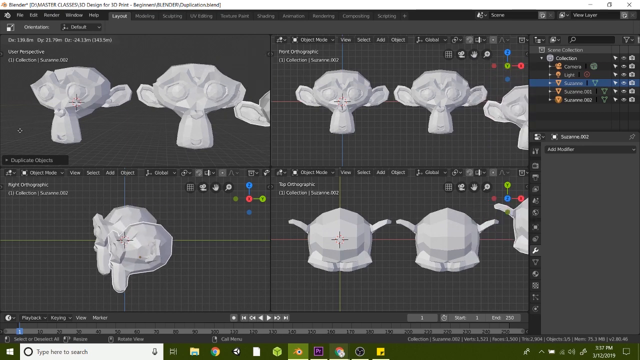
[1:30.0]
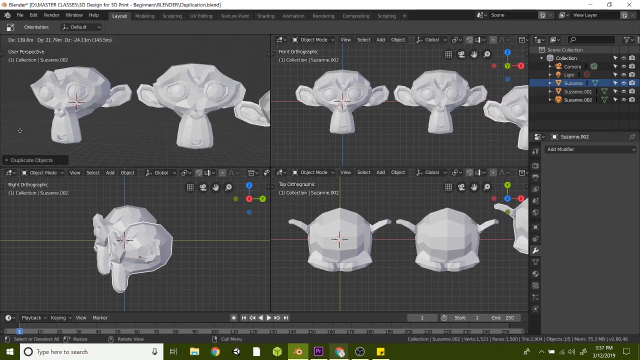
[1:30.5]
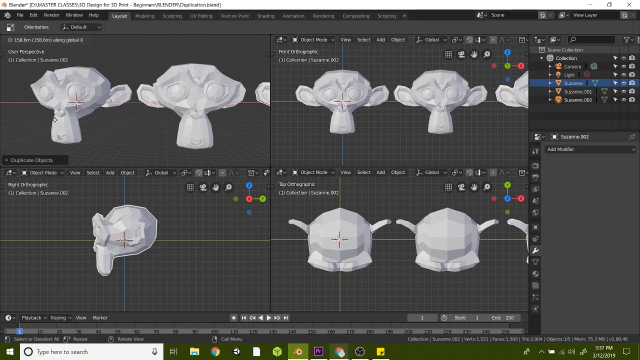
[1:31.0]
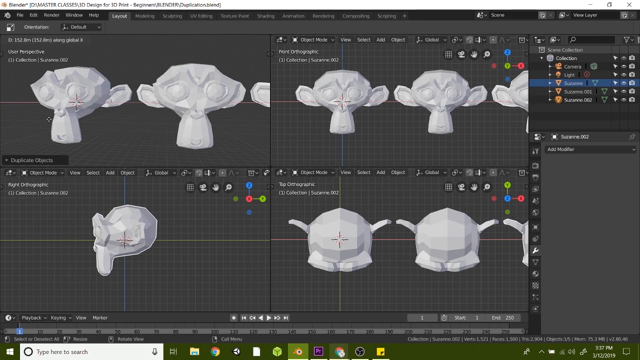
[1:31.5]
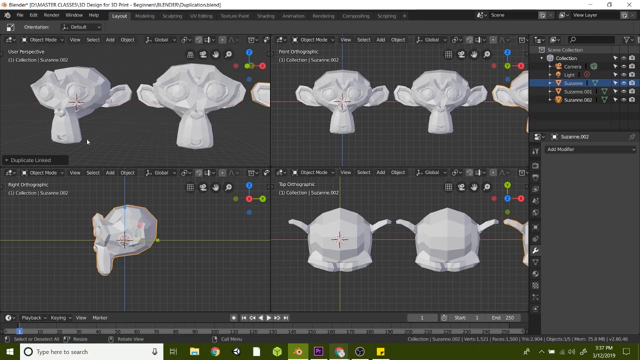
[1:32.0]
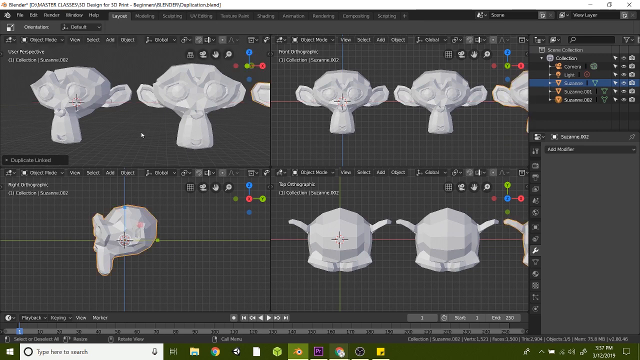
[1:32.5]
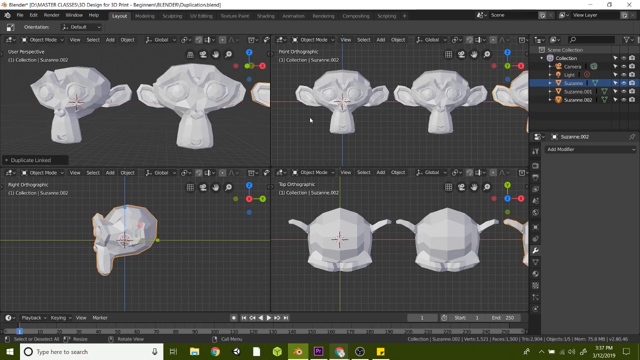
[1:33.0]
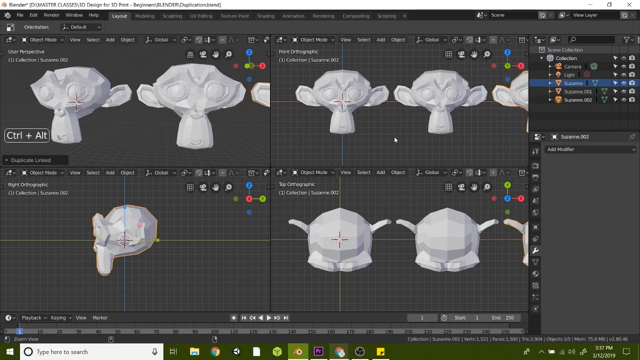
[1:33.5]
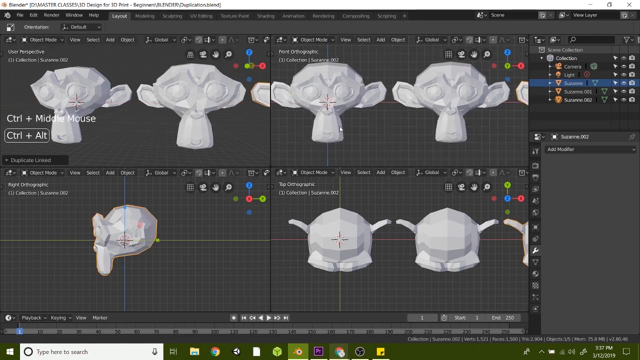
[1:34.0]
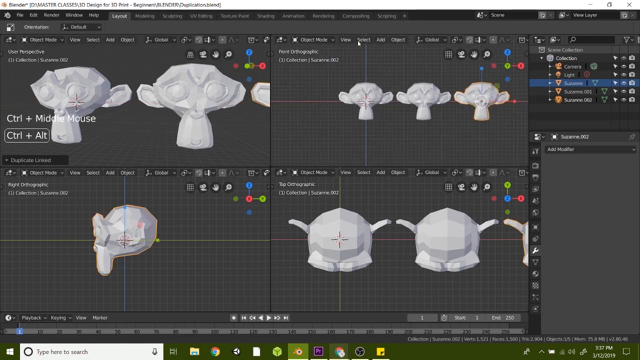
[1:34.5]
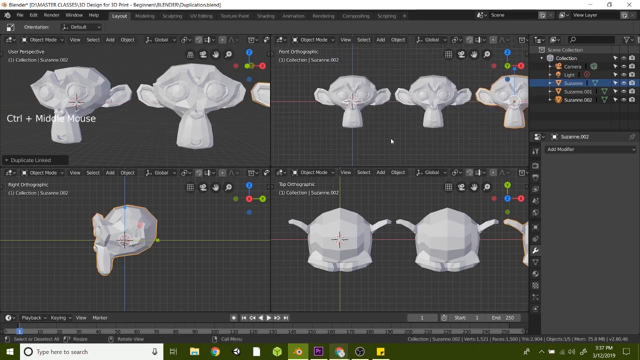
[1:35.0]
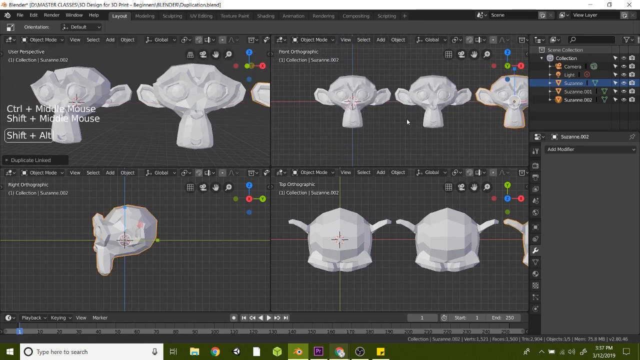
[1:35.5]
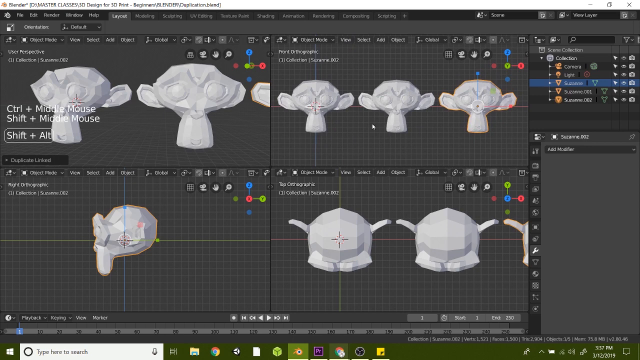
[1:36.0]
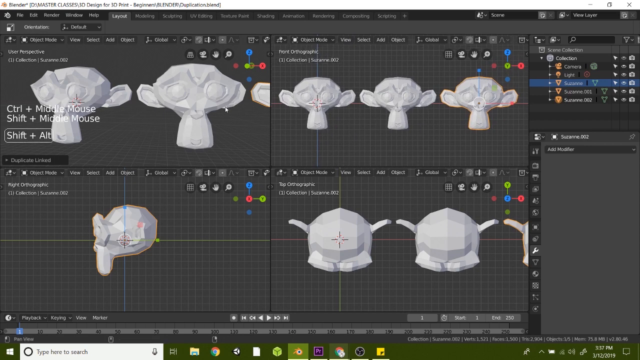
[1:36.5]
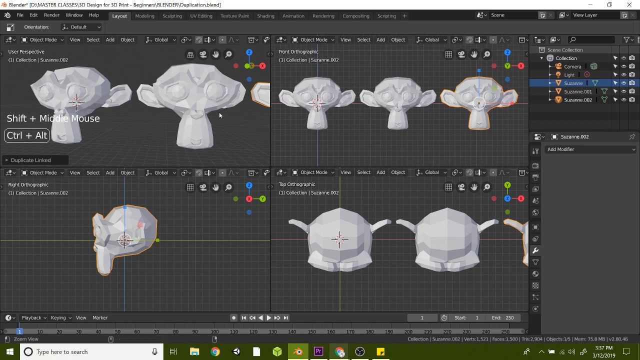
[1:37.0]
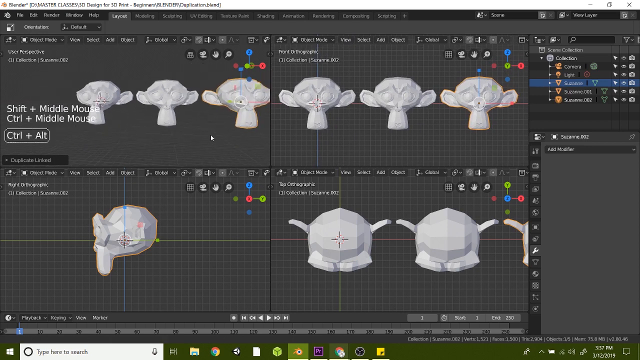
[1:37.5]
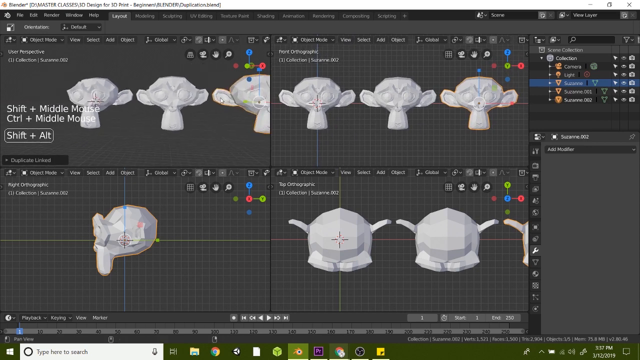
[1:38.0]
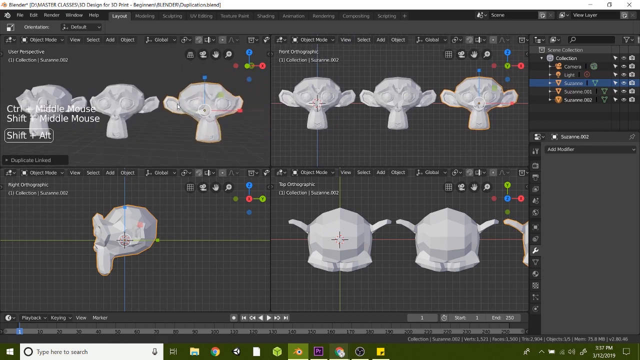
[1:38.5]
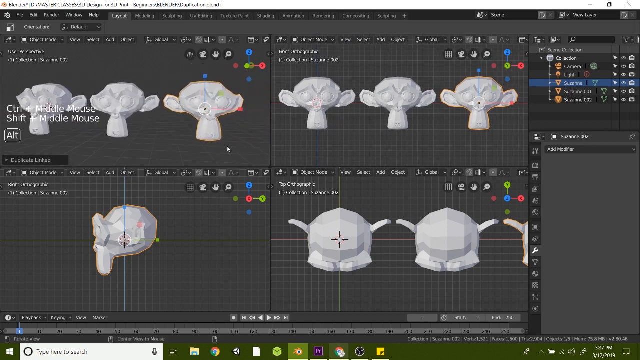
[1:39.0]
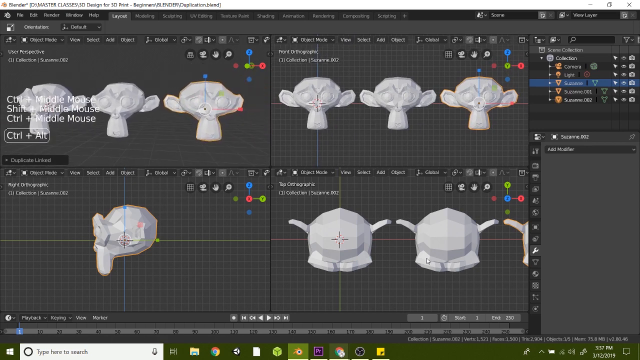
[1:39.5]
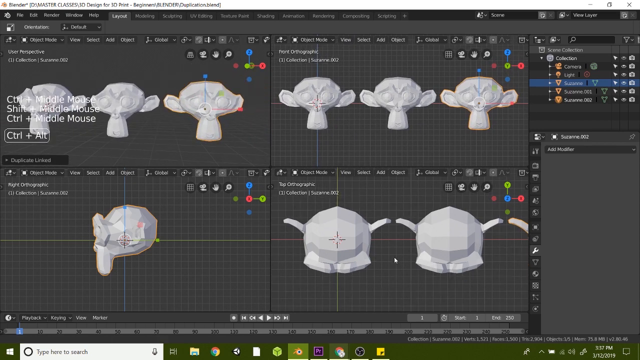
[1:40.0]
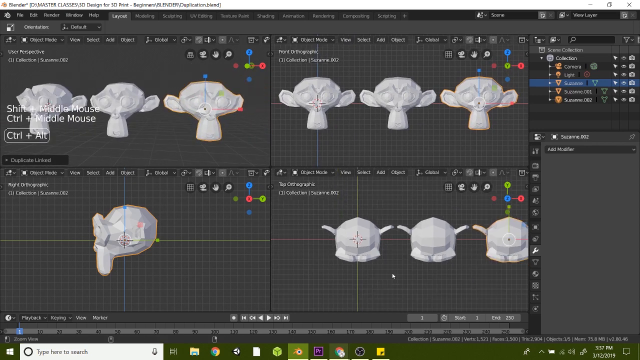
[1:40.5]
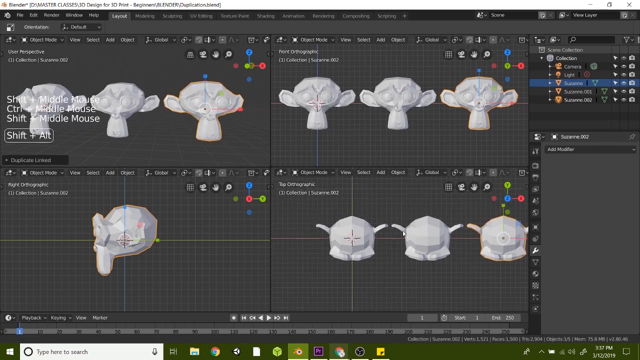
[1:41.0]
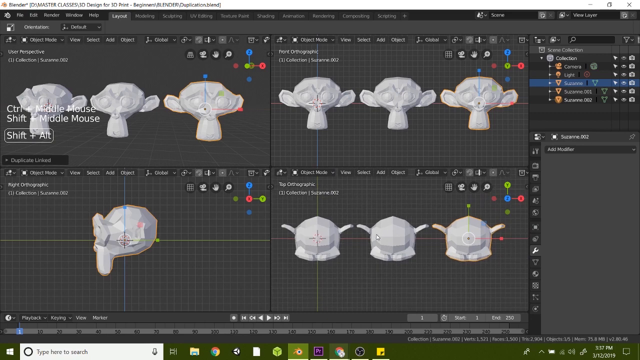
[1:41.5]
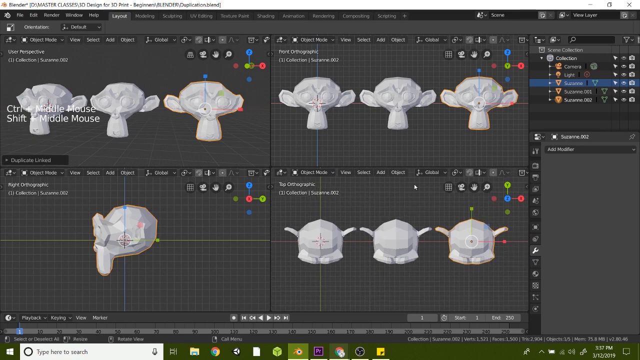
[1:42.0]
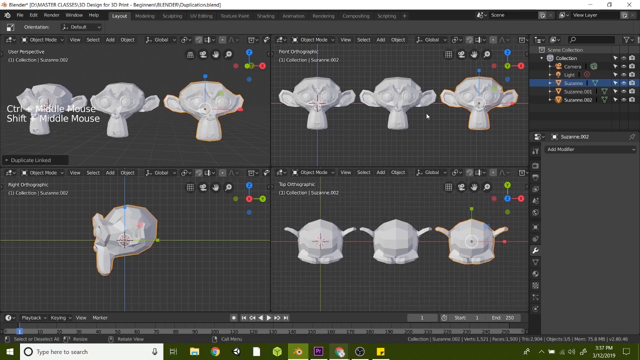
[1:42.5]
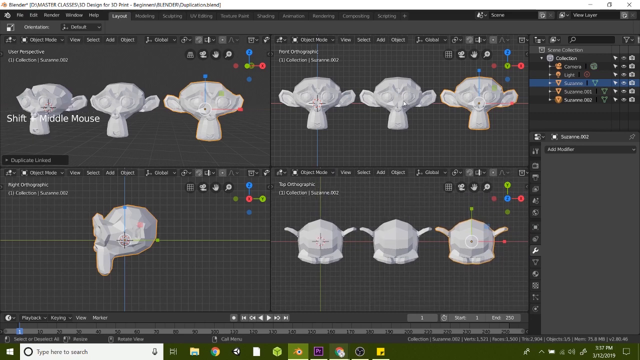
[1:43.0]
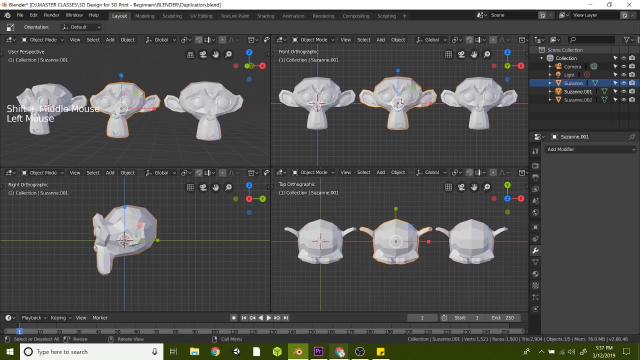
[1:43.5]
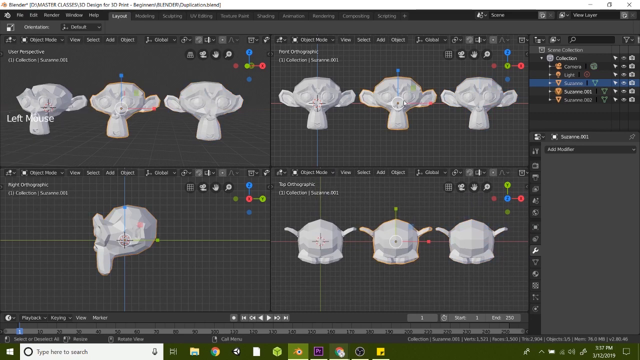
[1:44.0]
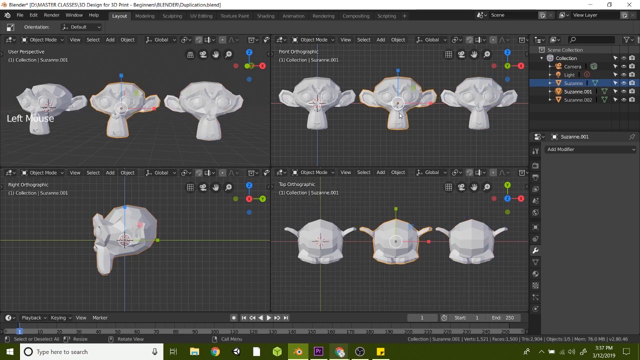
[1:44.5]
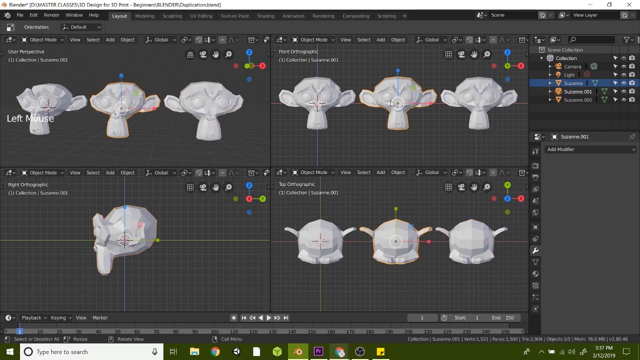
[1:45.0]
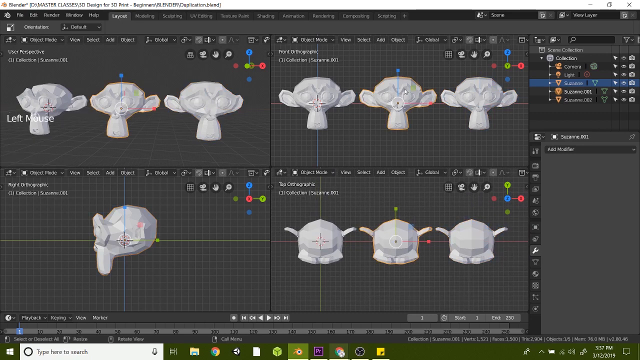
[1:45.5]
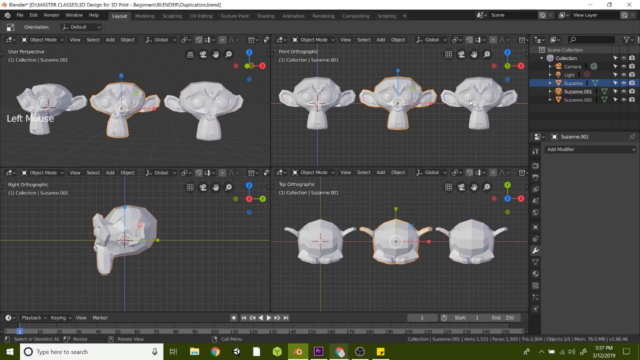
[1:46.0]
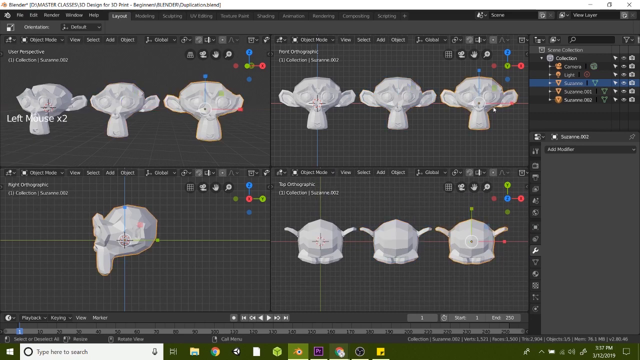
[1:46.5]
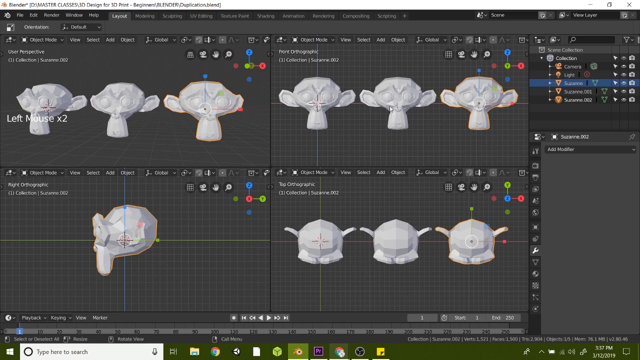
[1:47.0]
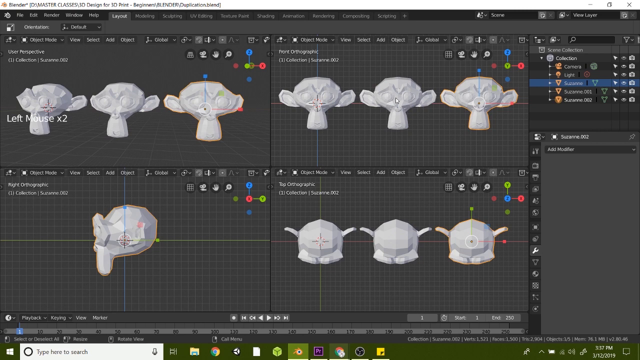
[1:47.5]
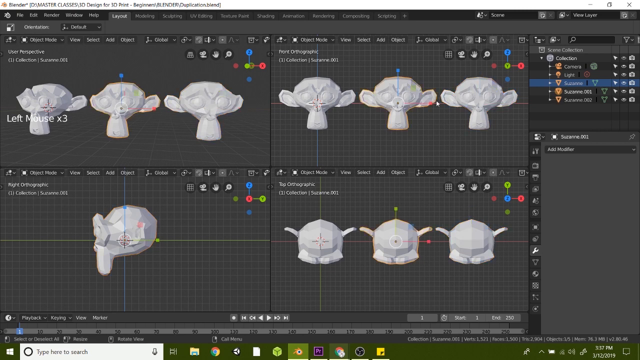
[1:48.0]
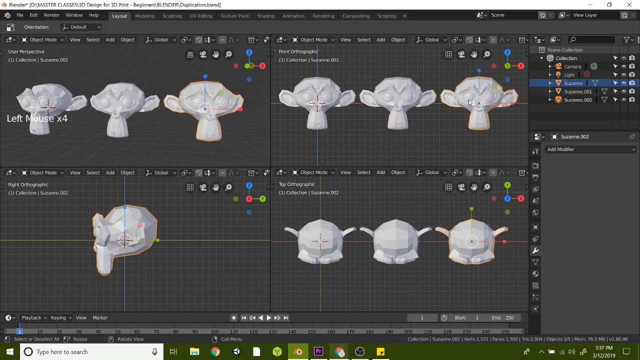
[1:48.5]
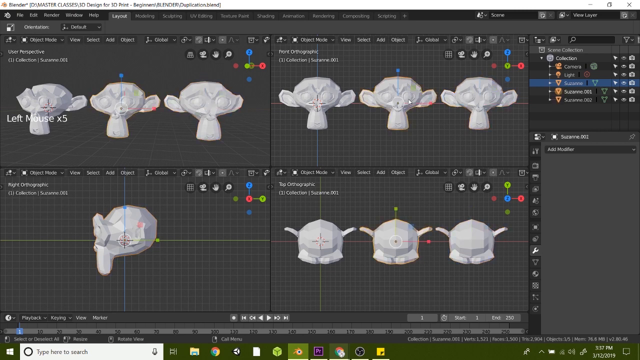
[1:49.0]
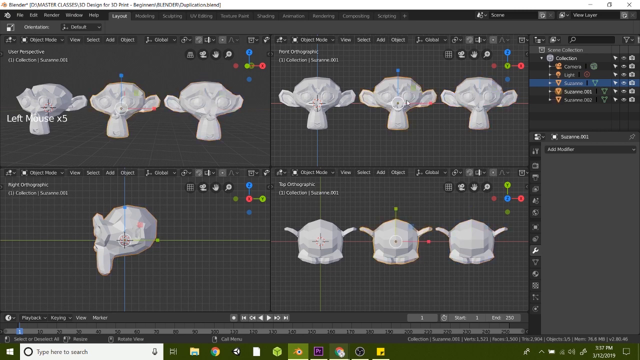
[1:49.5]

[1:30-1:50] The man apparently continues copying and pasting, showing how to manipulate and play with certain objects in Blender.